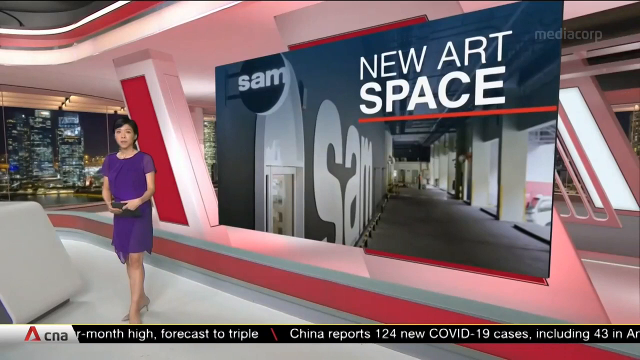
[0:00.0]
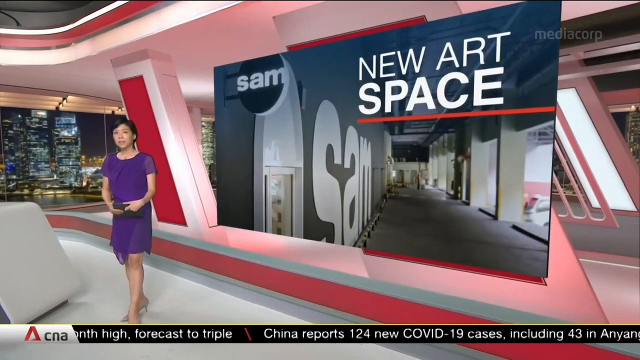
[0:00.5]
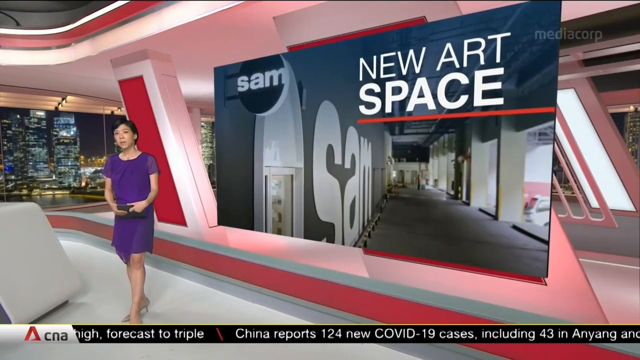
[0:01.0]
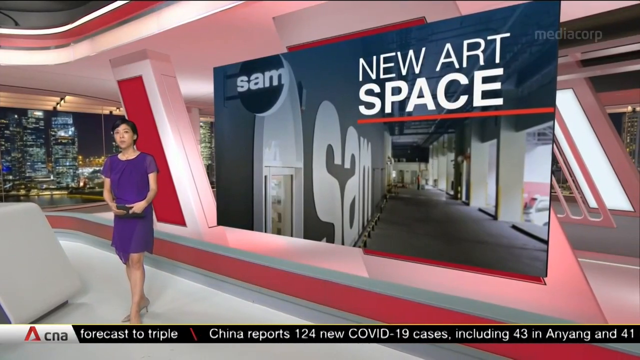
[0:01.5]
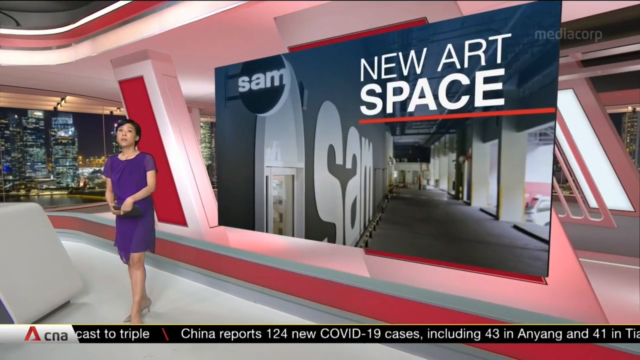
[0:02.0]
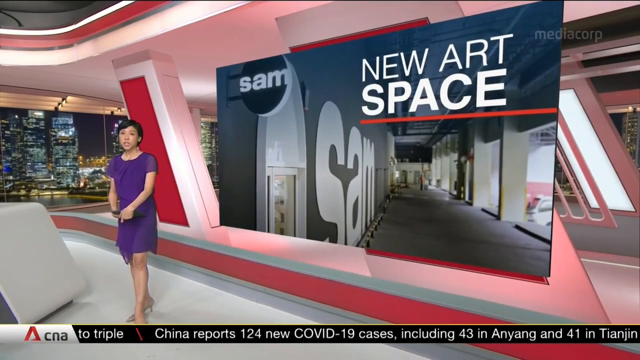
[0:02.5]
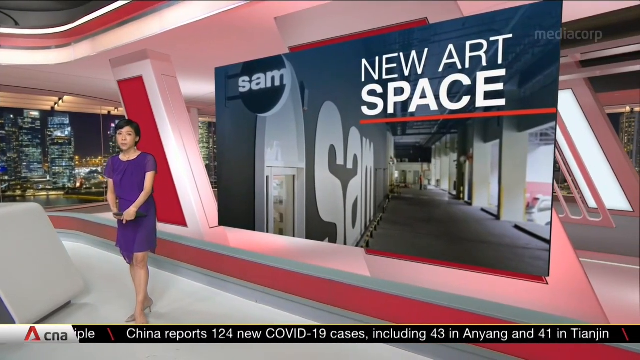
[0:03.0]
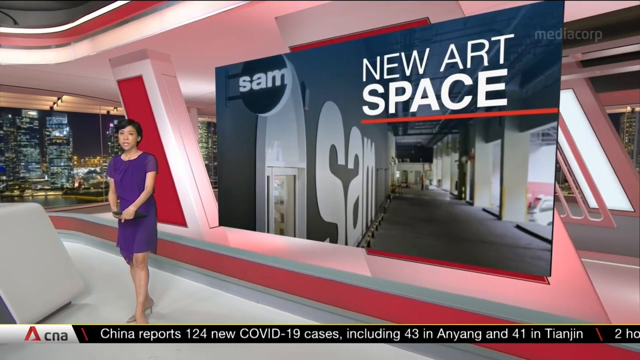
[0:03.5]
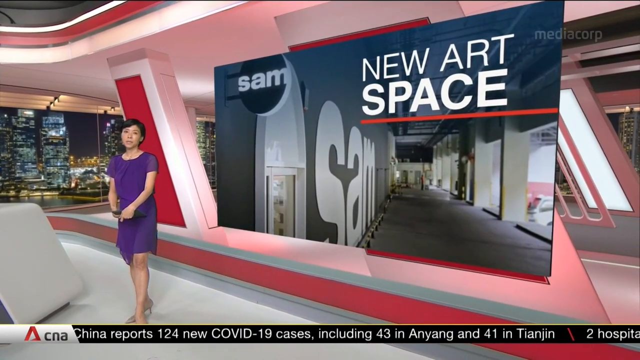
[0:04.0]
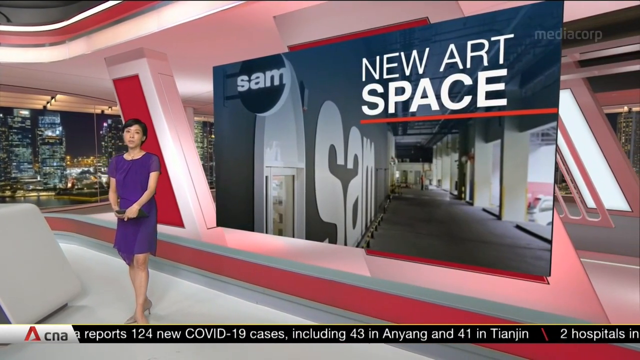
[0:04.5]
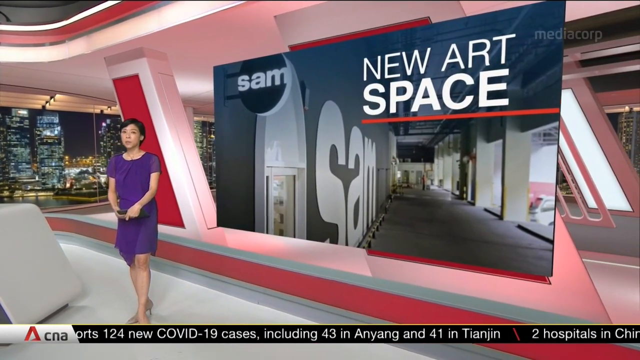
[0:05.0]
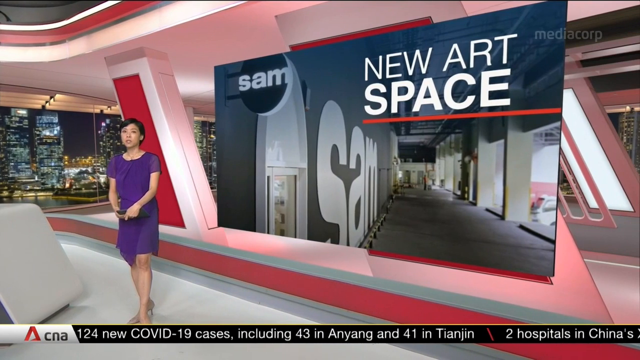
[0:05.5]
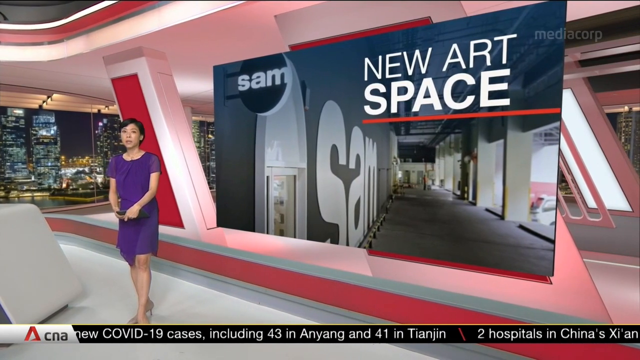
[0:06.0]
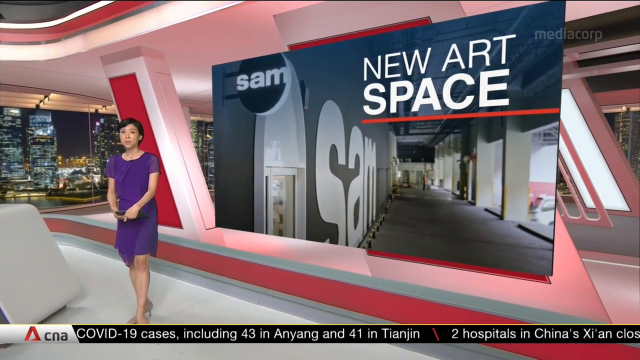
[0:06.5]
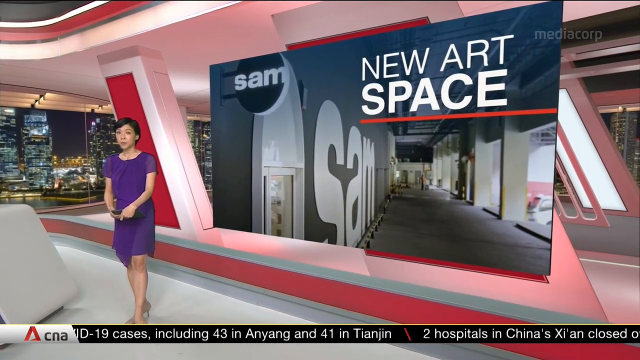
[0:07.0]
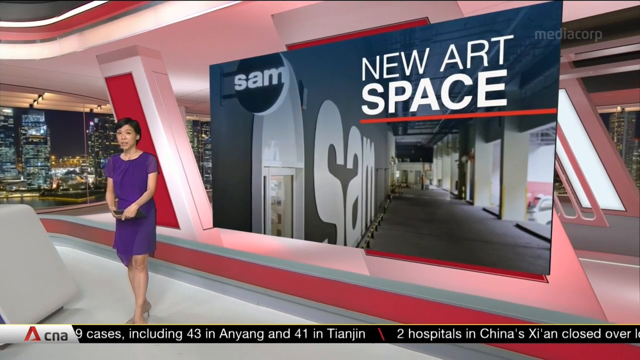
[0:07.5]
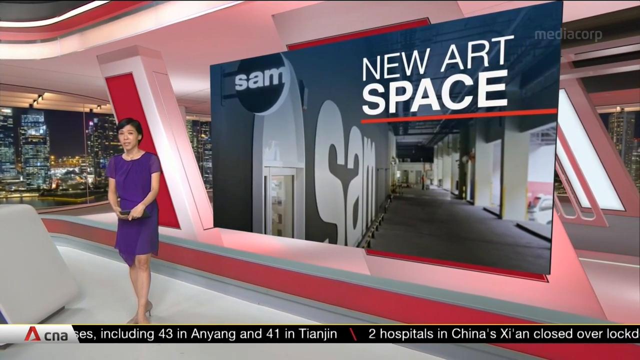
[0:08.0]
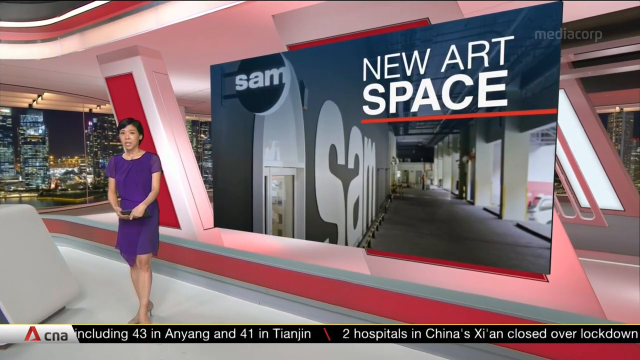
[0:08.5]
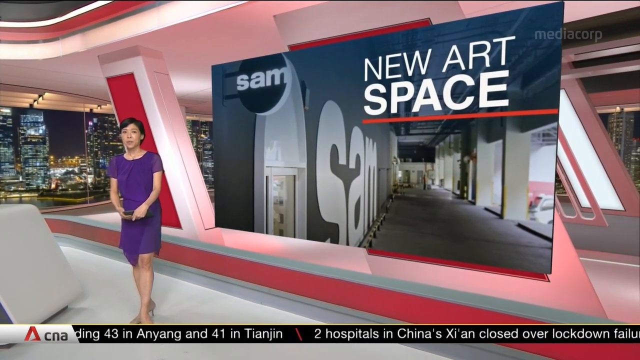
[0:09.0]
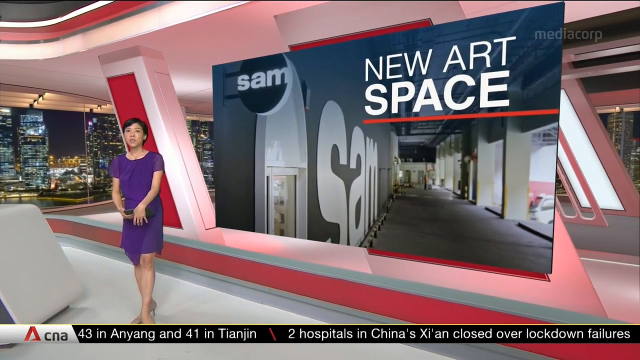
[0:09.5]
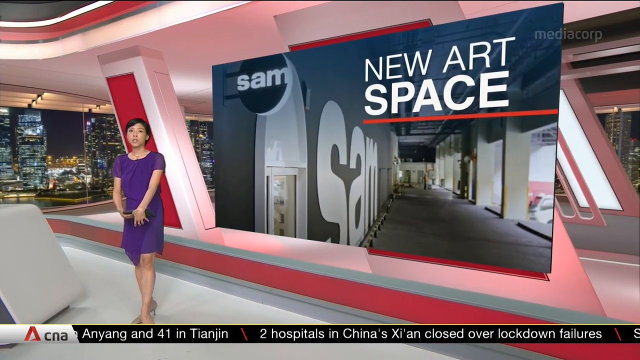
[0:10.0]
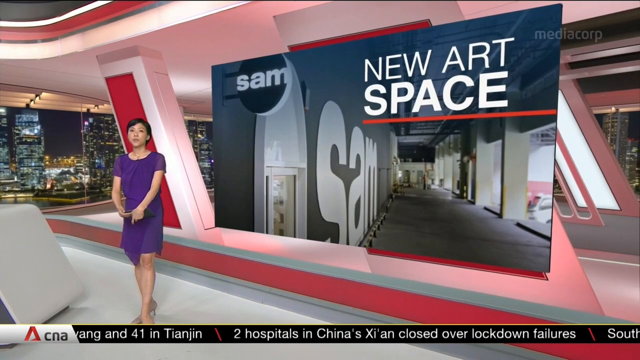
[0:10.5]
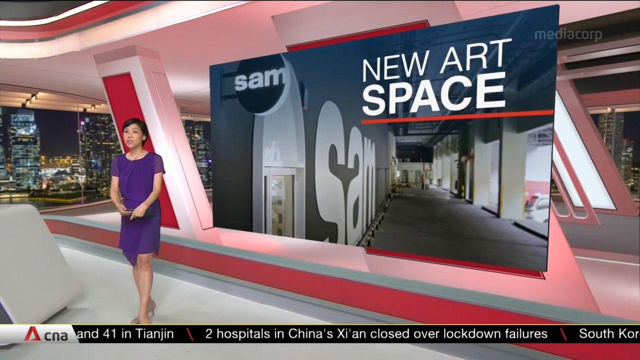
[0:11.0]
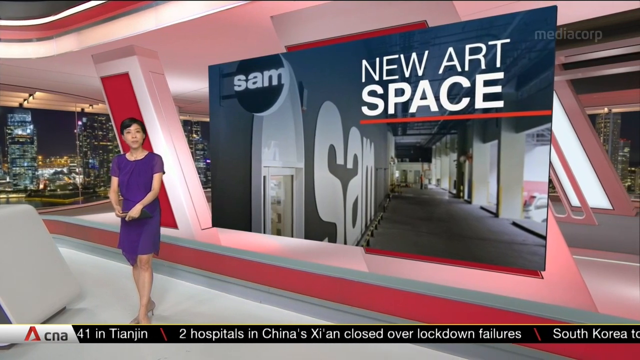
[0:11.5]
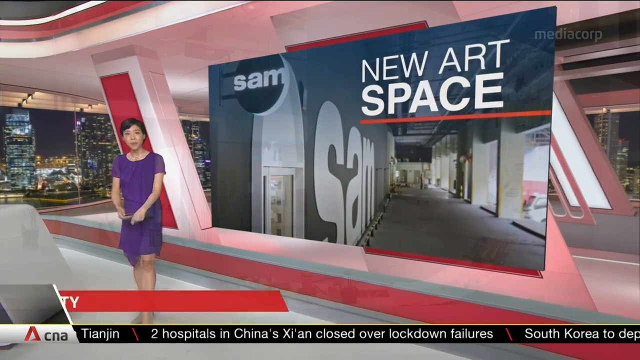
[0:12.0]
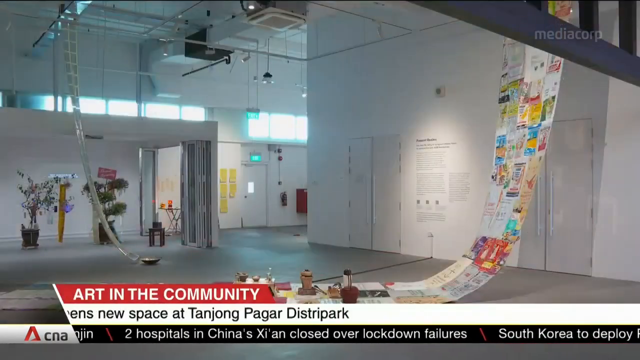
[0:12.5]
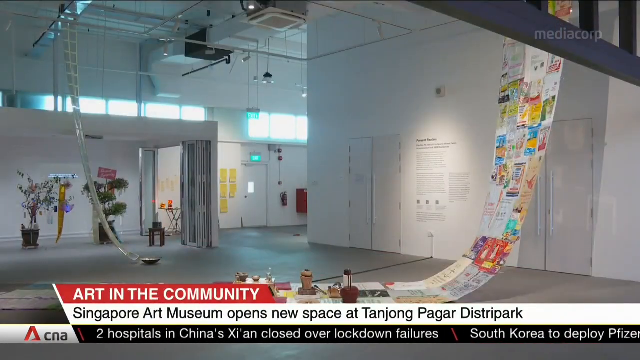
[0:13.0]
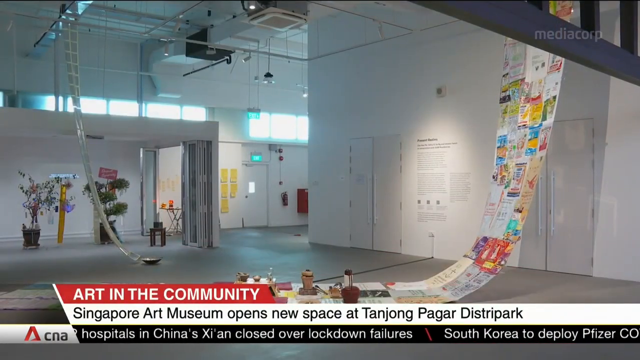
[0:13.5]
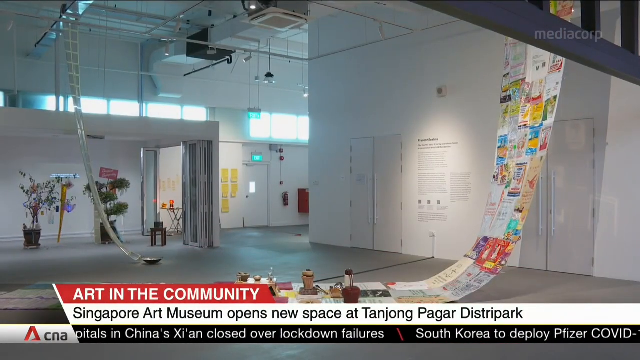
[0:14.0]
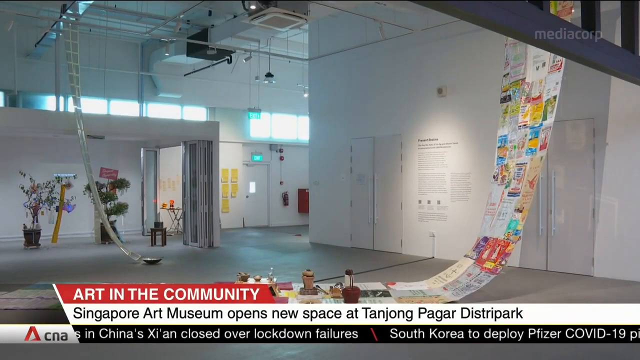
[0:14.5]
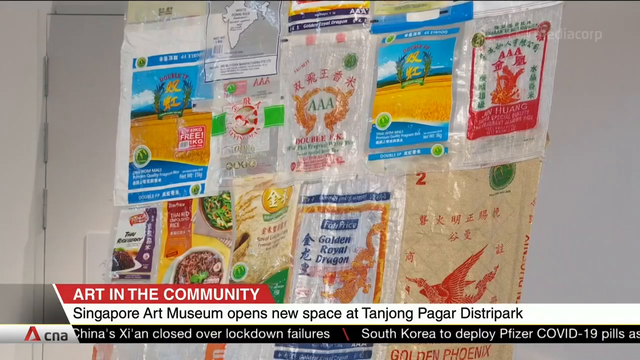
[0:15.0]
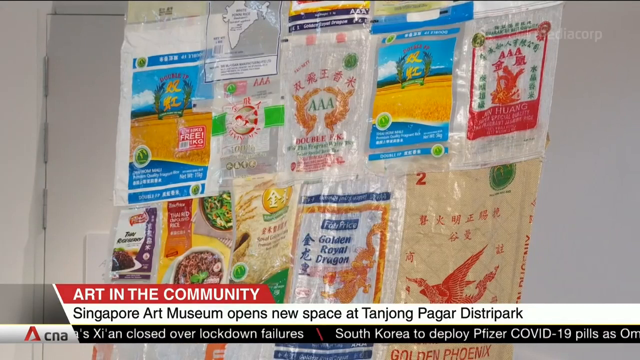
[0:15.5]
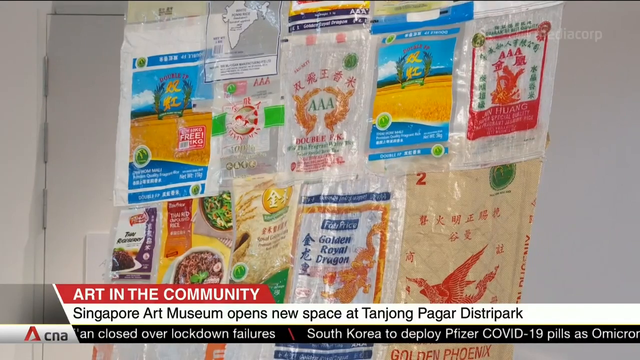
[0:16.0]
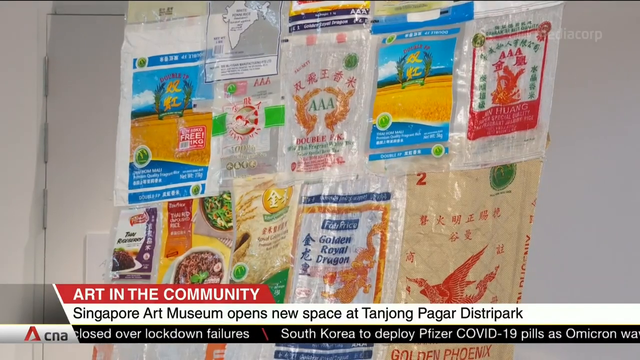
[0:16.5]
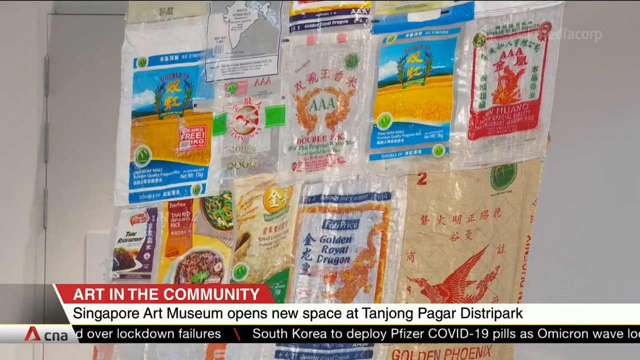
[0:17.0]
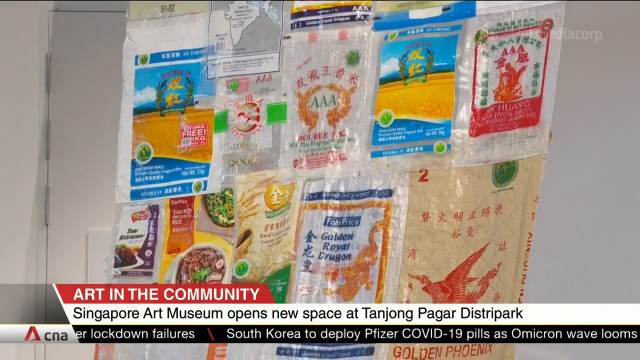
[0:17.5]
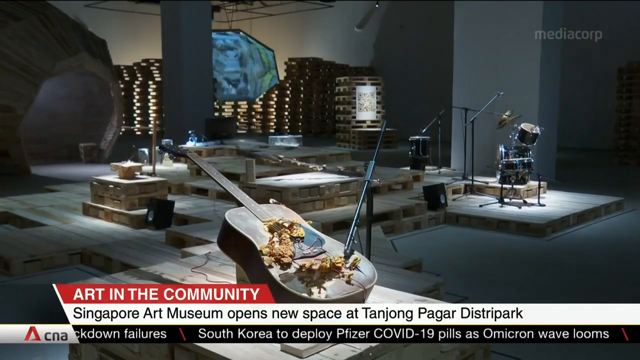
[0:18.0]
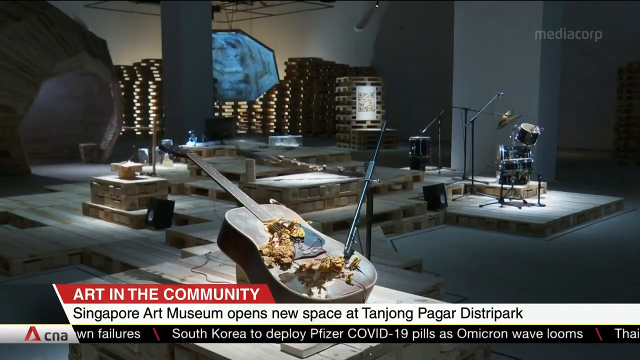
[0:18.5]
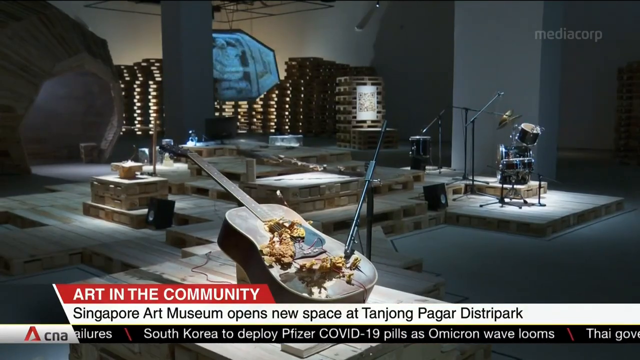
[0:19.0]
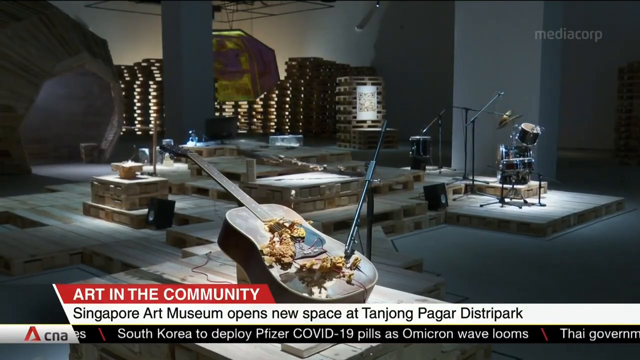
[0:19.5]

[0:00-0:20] What looks like a female newscaster is in a studio. On the left side, a city with buildings and tall skyscrapers is visible. She wears a purple dress and holds an electronic device in her hands. The screen in the background reads "new art space" and shows a picture of a building hallway, along with the text "Sam". The newscaster talks while facing the camera. The next scene shows the inside of a building with white walls and what looks like a concrete floor. A banner at the bottom reads "Singapore Art Museum opens new space at Tanjong Pagar Distripark." Various art pieces are then shown, including one that seems to be dangling from the wall. The next piece looks like instruments, a guitar and a drum set, both made into art pieces. This room is a little darker, but the art pieces are lit up. A ticker tape runs across the bottom of the screen.